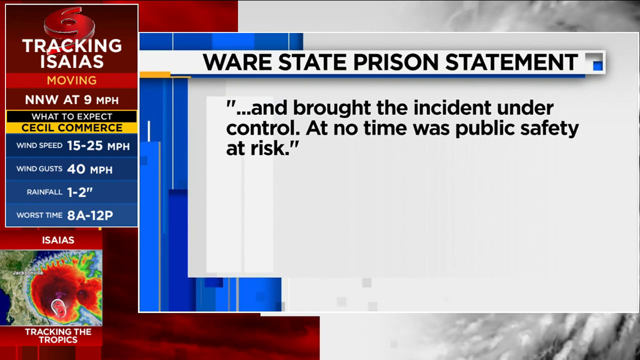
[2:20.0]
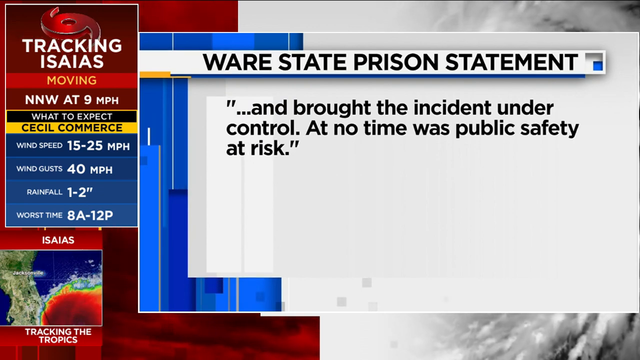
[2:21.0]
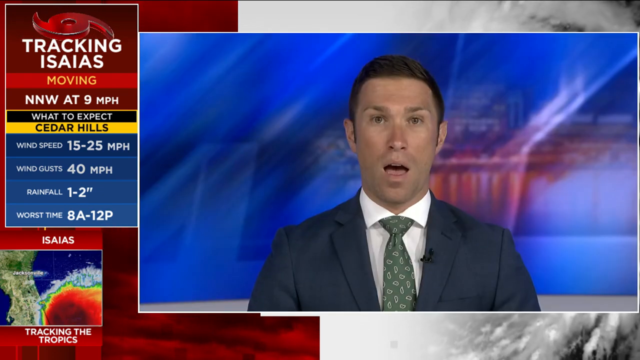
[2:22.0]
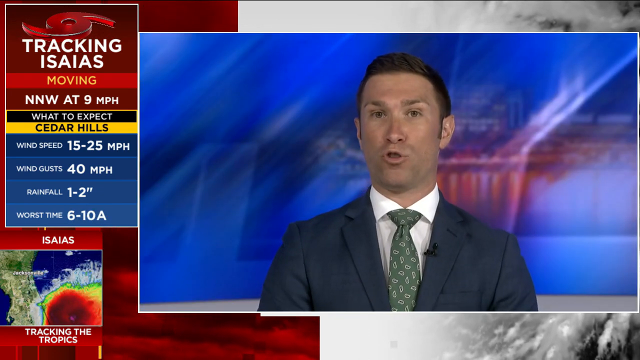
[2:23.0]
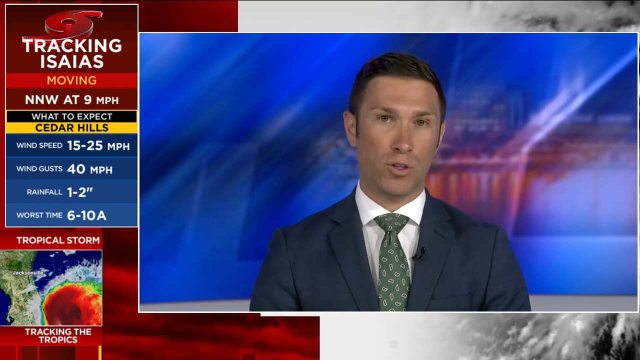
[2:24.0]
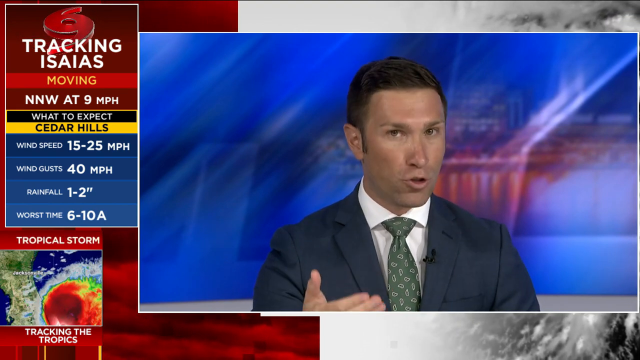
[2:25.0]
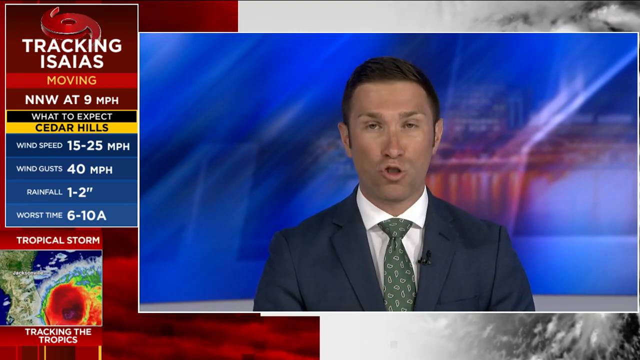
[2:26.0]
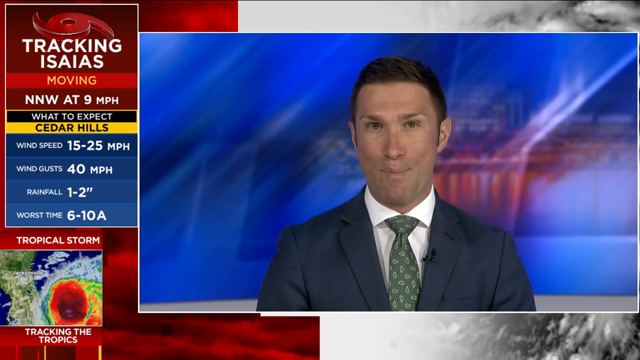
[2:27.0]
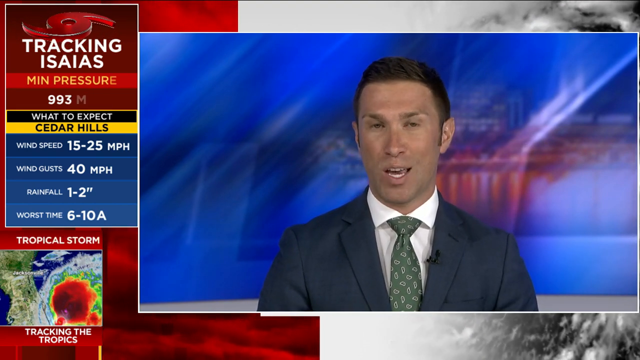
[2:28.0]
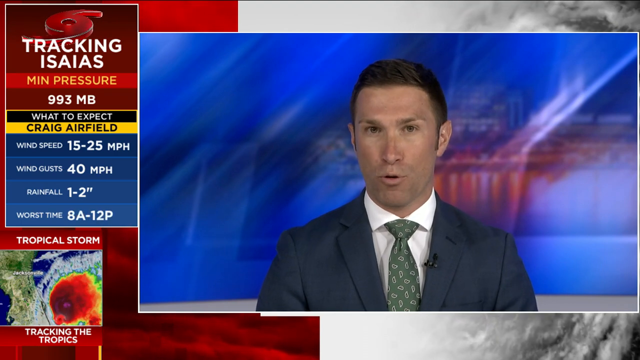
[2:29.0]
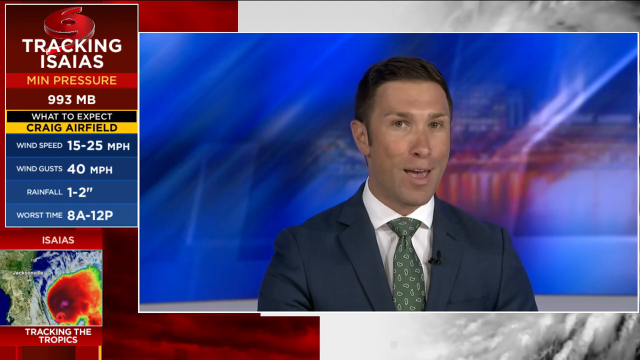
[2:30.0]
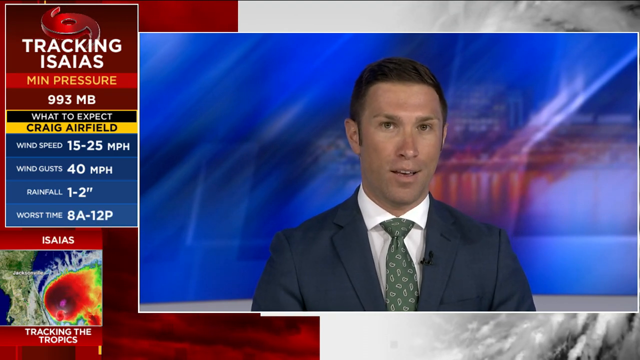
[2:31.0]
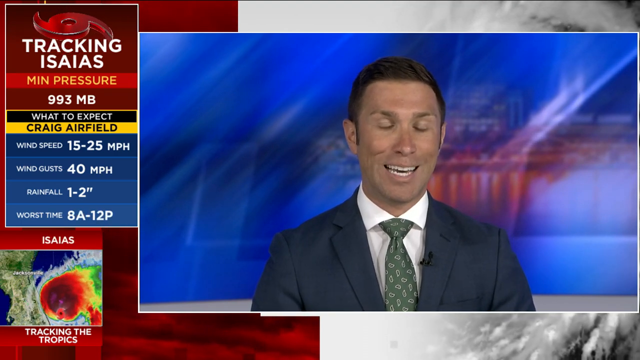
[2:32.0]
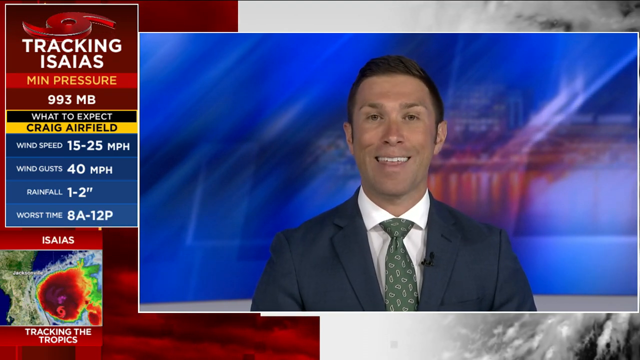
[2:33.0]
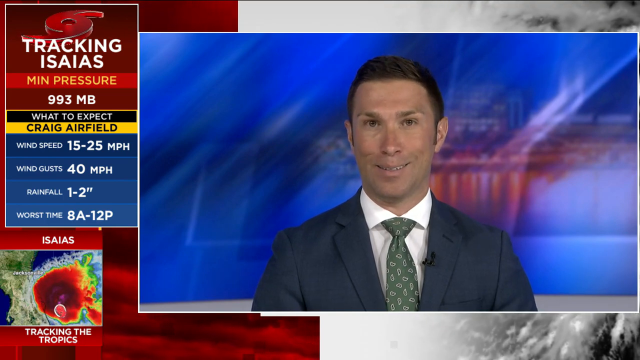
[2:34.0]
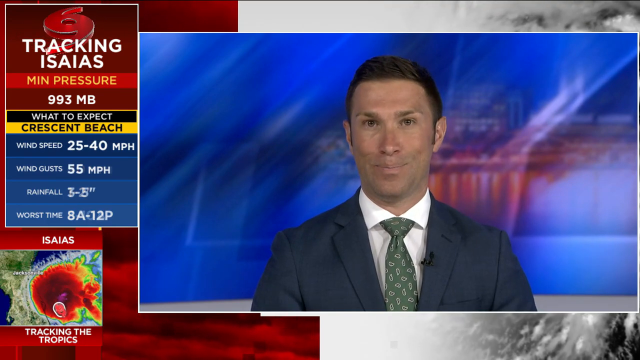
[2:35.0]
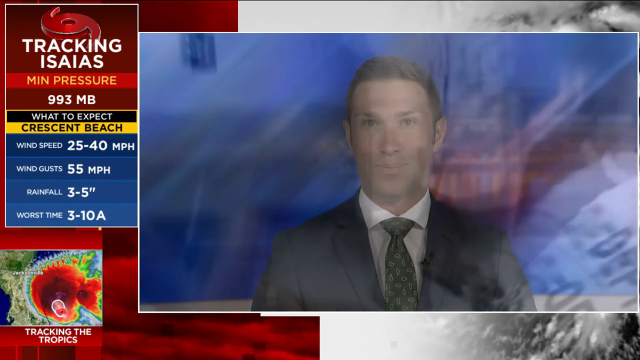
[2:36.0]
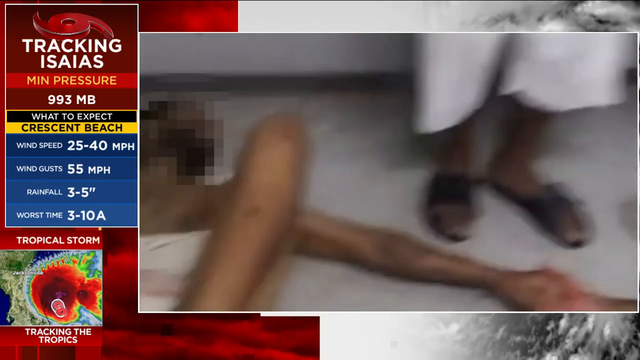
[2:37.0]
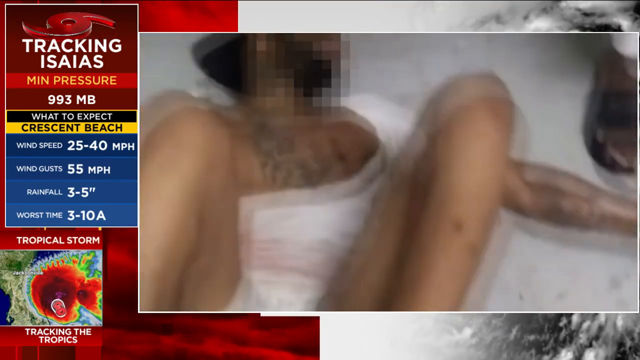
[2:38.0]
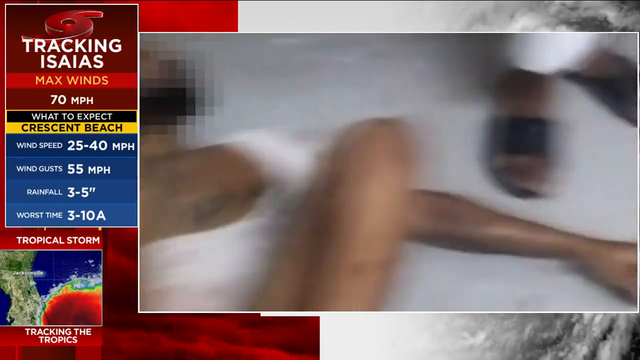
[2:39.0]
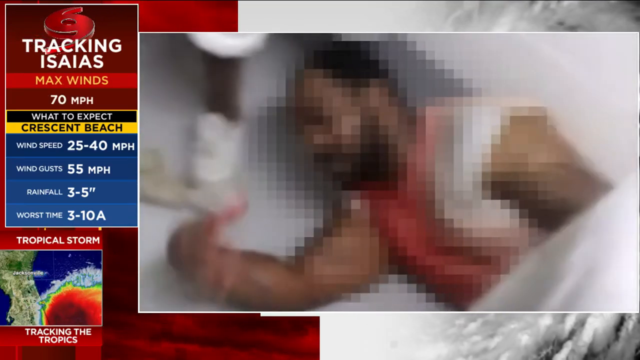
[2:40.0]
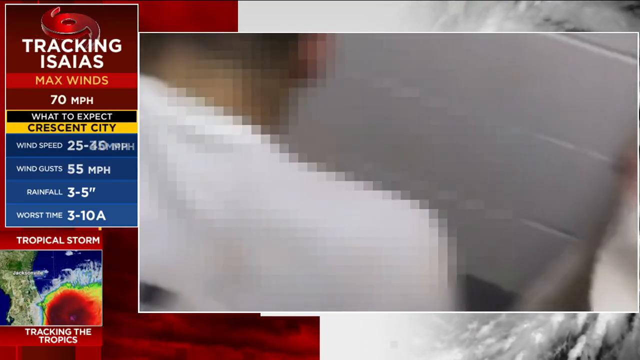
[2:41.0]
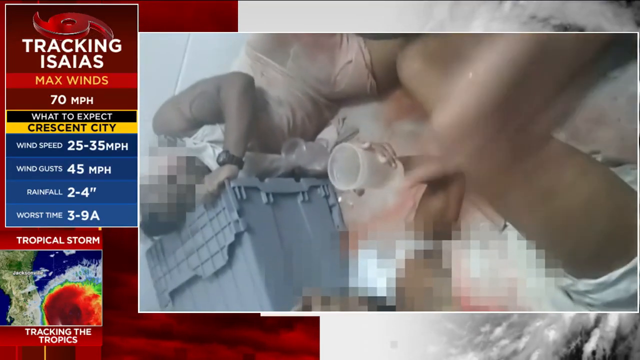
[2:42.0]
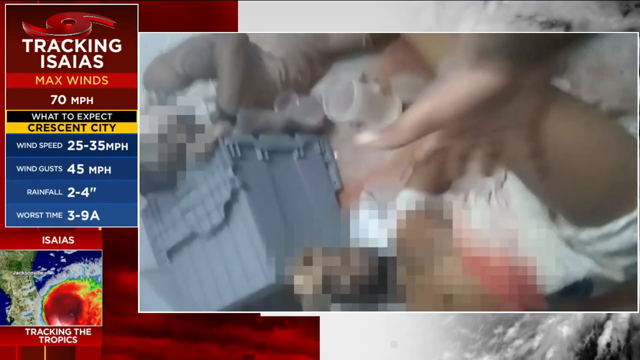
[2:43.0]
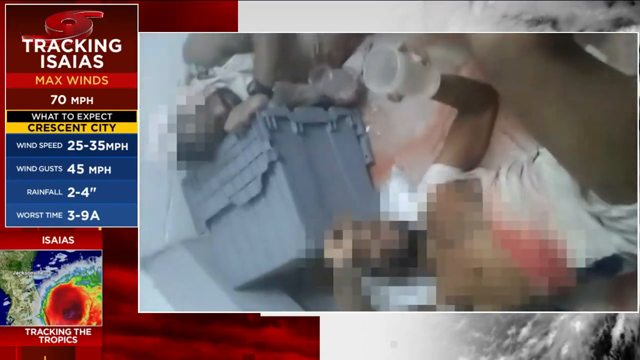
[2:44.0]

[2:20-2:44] The text continues: "brought the incident under control at no time was public safety at risk", written in black in quotation marks on a white background, with clouds moving behind the statement. A man who looks like another news anchor wears a dark green suit, a green tie with white dots, and a white undershirt. His lips form an "ooh" shape, and his hand is extended slightly as if motioning. A blue and red background is behind him. He talks with his mouth very wide, moves slightly while talking, and blinks a lot. The video shows the men lying on the ground; one is holding one's hand, and there is visible blood on their clothing. There are people with cups. It goes back to the screen with the written statement. The man who was talking has a clip on his suit and kind of yellow, very big teeth. Two men lie on the floor, and one motions a lot. The cameraman holds his hand out and waves it.